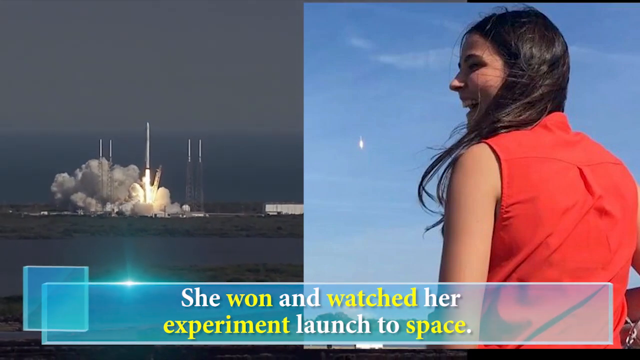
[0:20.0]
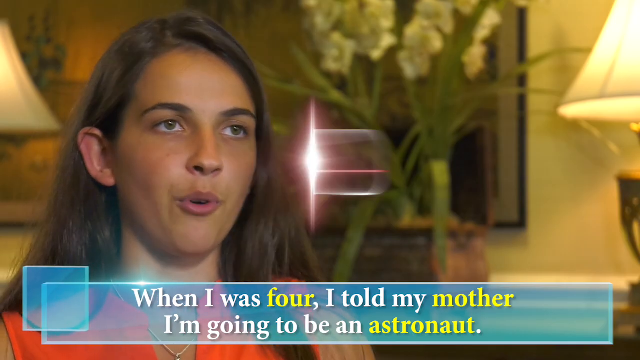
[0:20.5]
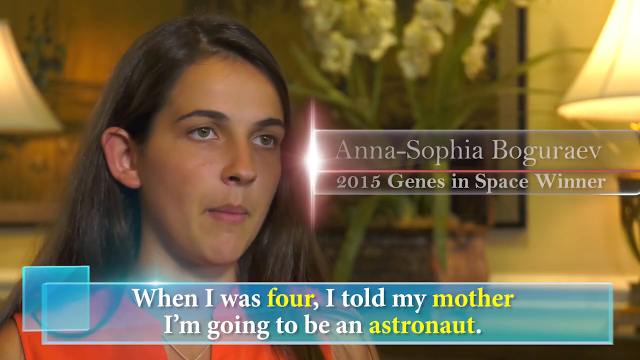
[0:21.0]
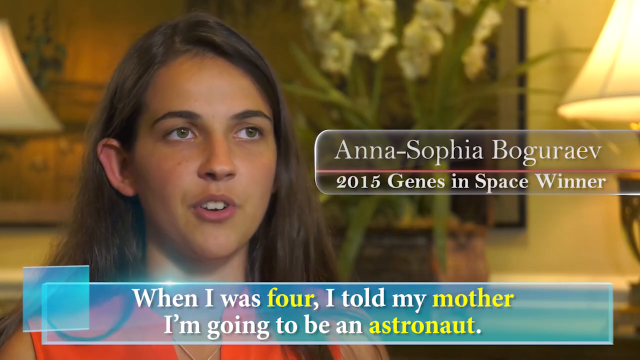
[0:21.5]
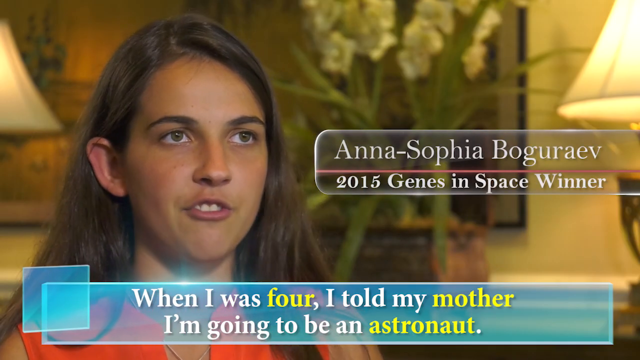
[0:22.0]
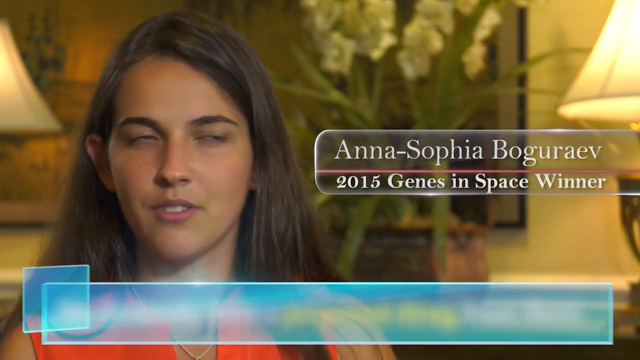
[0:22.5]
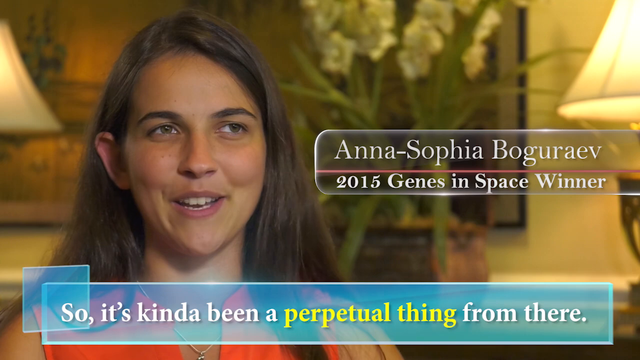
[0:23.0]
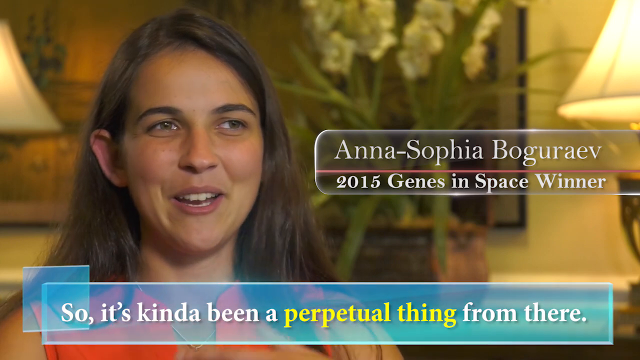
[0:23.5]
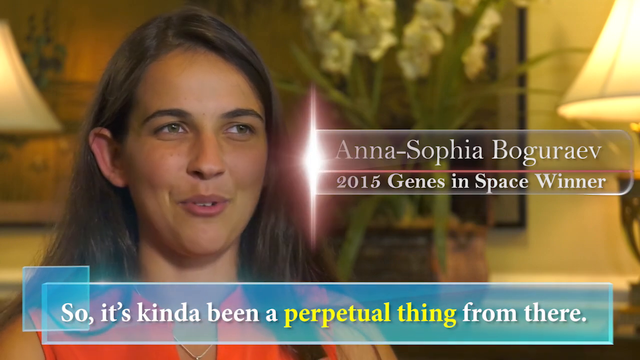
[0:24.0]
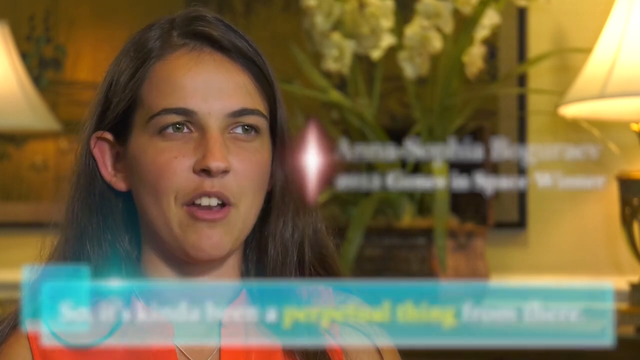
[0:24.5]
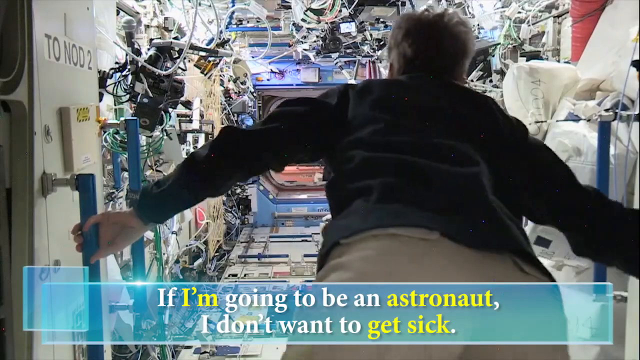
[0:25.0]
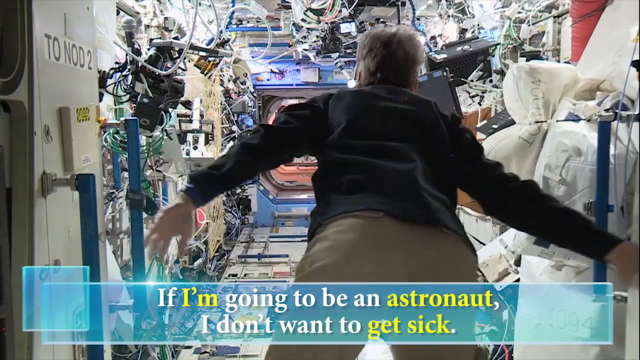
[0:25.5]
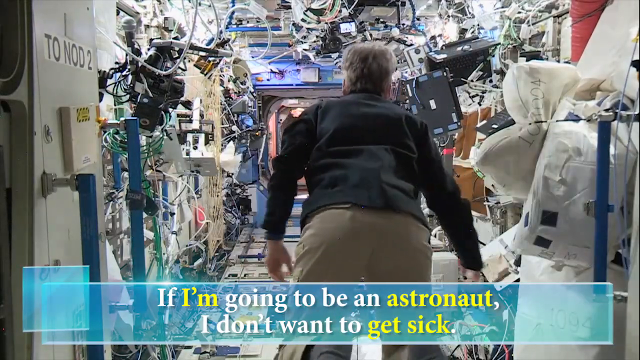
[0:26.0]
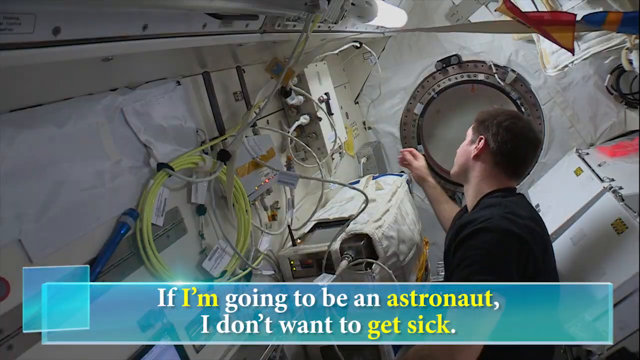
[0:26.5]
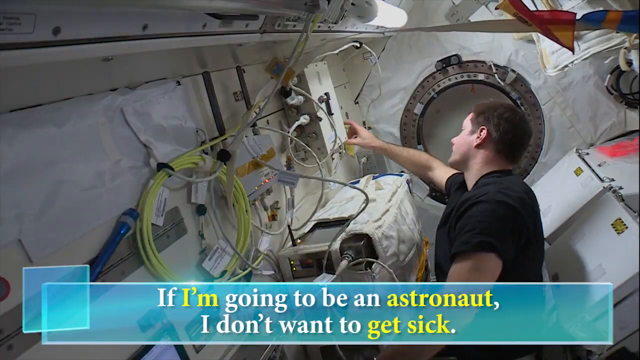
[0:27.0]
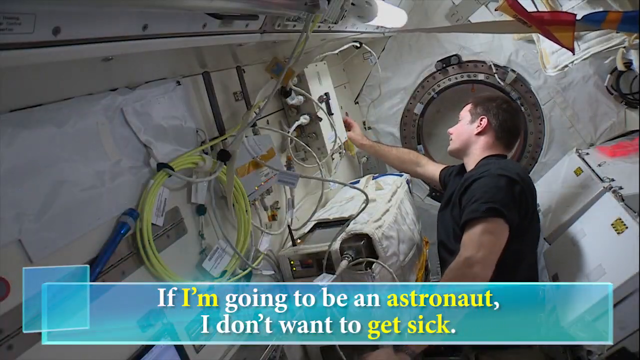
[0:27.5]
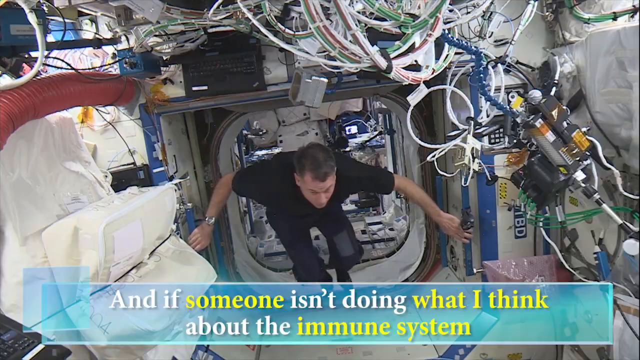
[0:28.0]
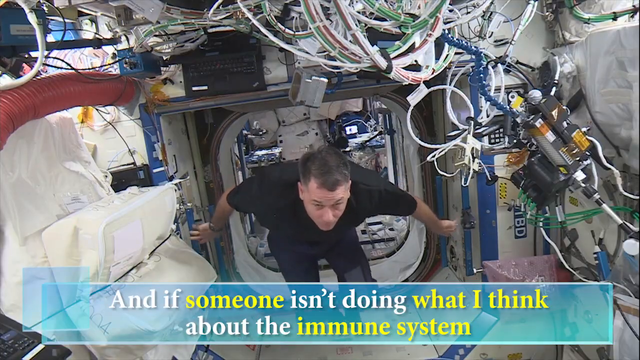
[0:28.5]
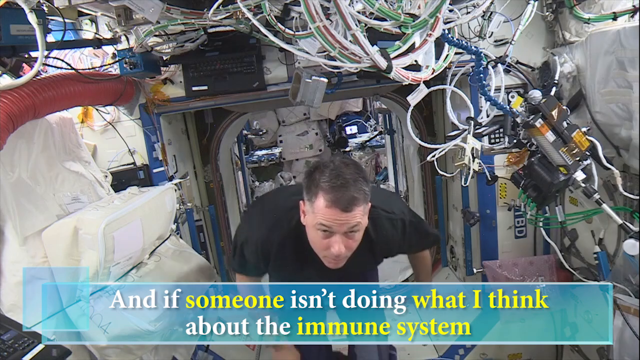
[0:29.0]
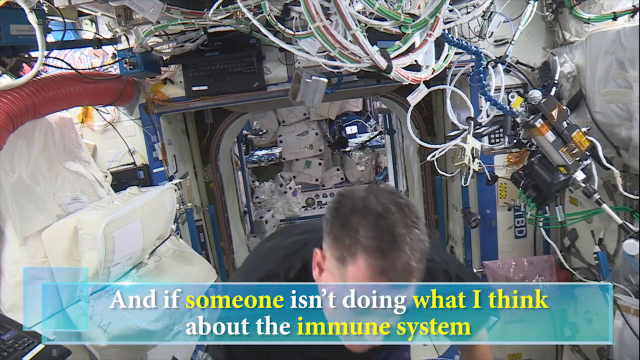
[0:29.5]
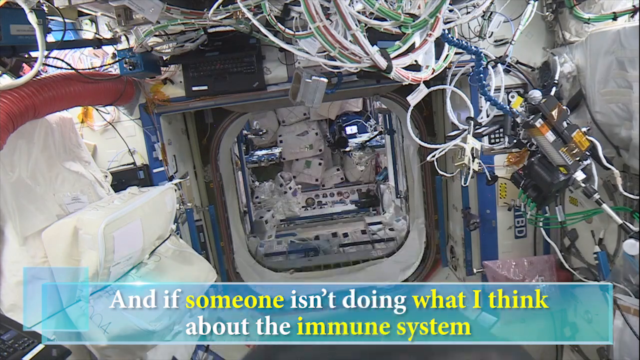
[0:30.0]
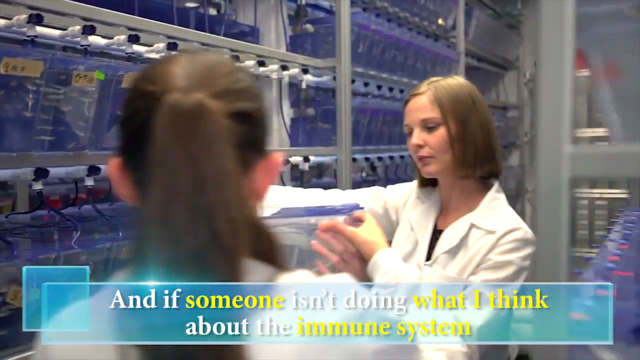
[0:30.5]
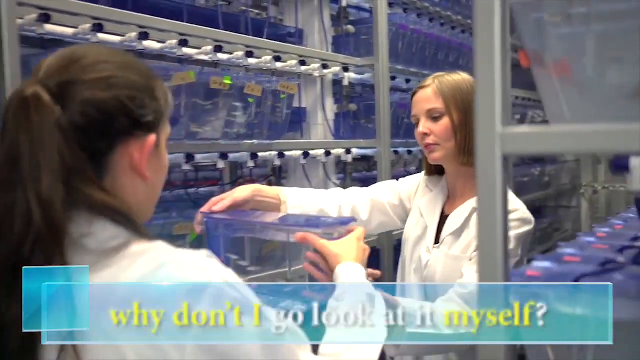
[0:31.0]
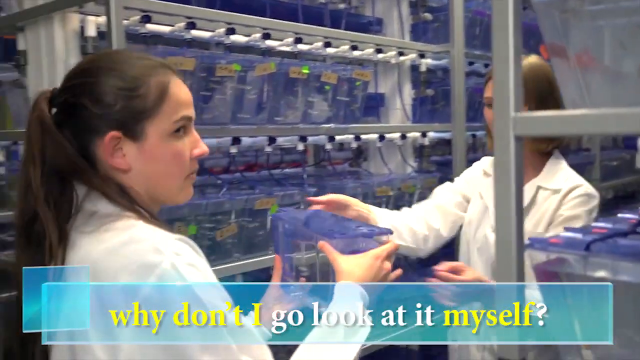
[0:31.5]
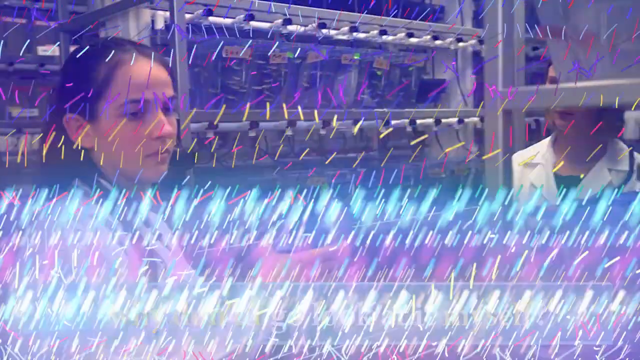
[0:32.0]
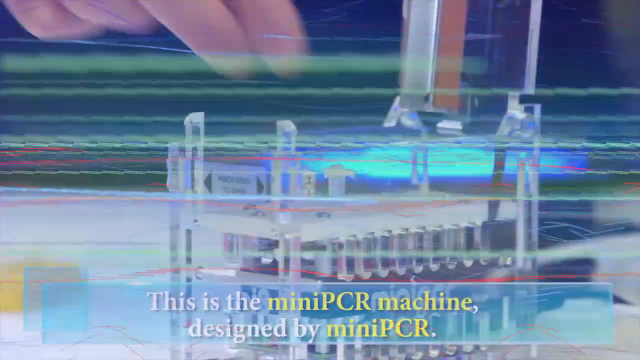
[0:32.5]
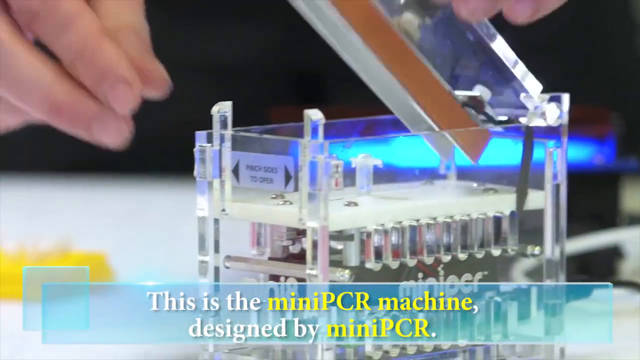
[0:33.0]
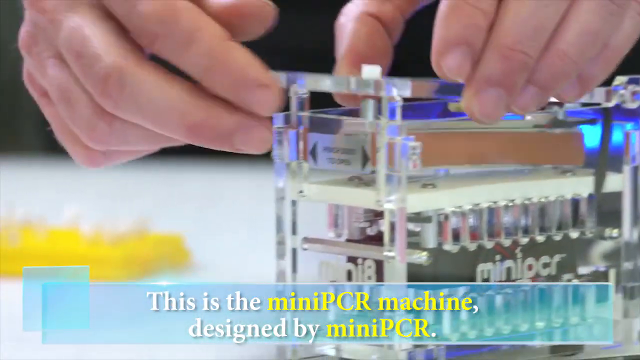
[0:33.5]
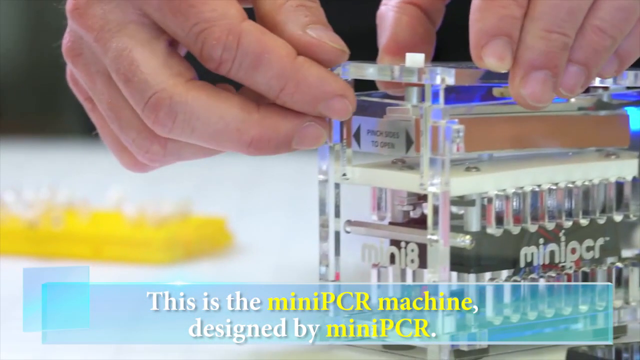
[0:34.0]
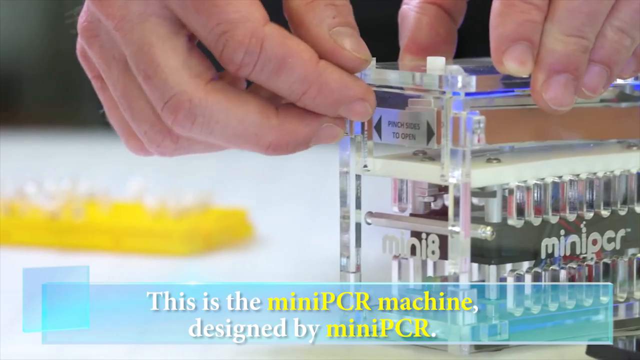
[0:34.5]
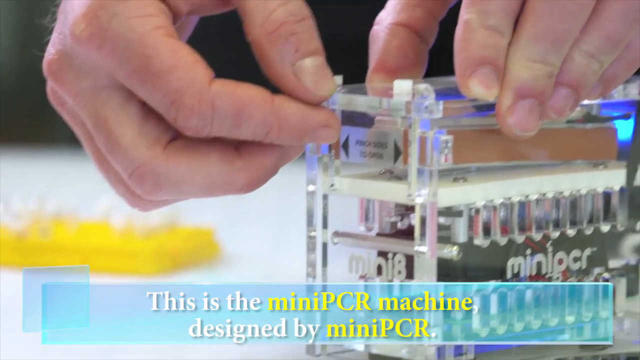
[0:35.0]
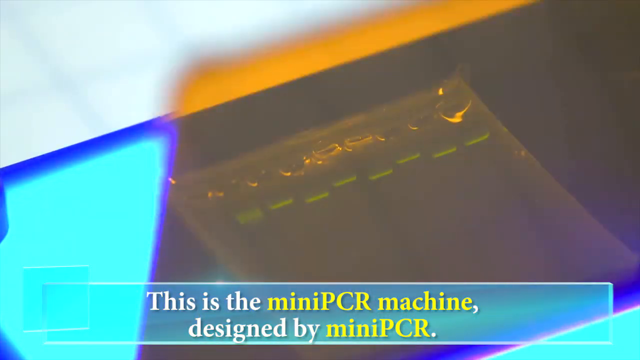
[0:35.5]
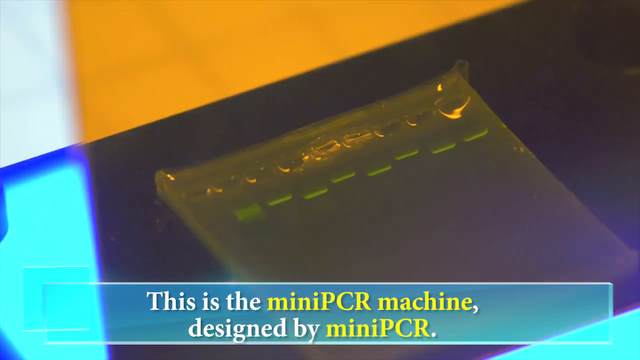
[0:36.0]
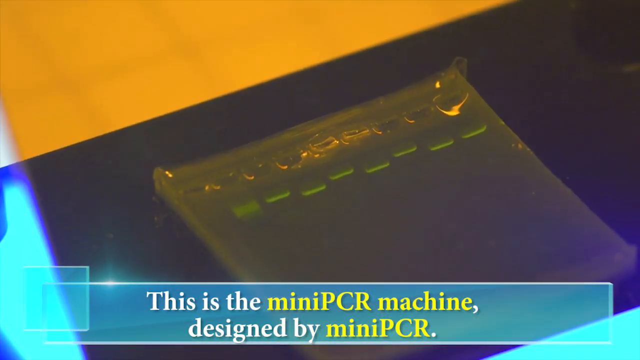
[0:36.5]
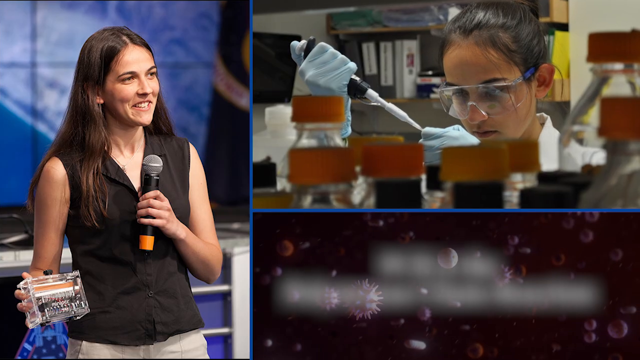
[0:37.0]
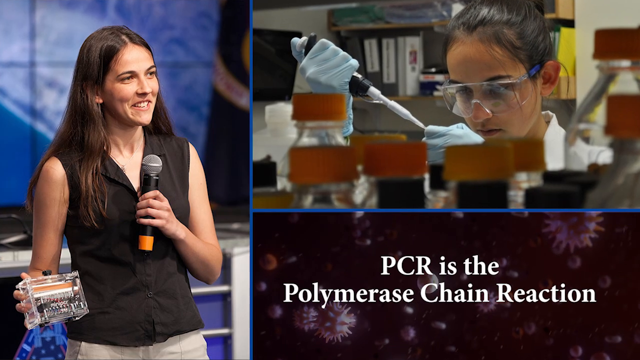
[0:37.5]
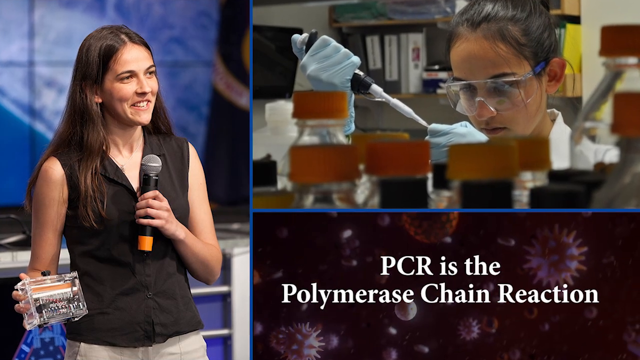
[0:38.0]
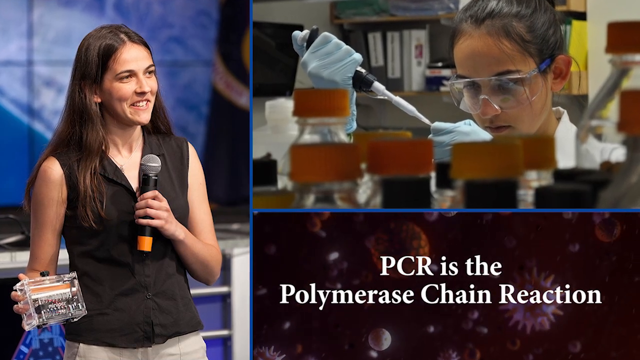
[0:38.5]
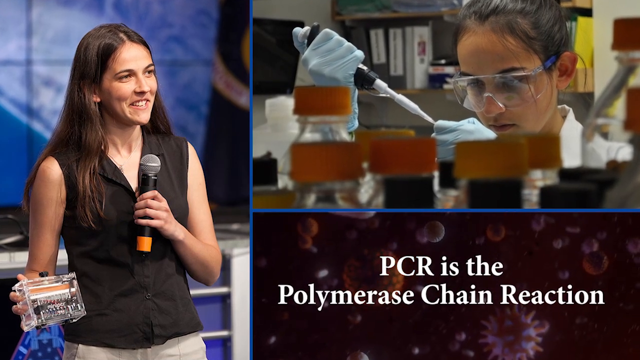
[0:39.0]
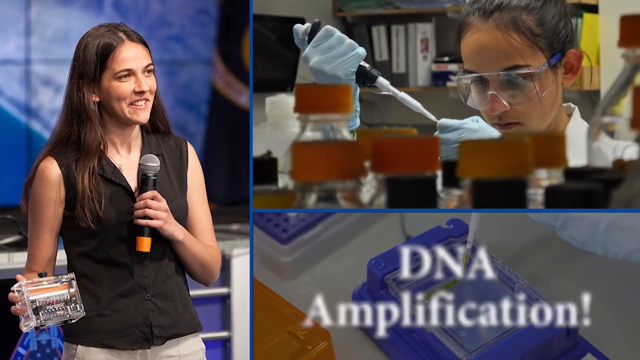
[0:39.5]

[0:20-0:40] A woman with long black hair in a red shirt smiles and laughs while her hair kind of blows in the wind against a blue sky. On the left is a launch with smoke and fire, and a blue banner at the bottom carries white and yellow text reading "she won and watched her experiment launch to space." Text reads "When I was four I told my mother I'm going to be an astronaut" as a woman talks to the camera, with her information on the right in a kind of transparent banner reading "Anna Sophia Bugharev 2015 Genes in Space winner." She talks and smiles, and another blue banner at the bottom with white and yellow text reads "so. It's kind of been a perpetual thing from there. If I'm going to be an astronaut I don't want to get sick." Someone comes in through a door with NASA equipment kind of surrounding them, floating. Then a man with a bunch of cables around him grabs something kind of off the wall, and he is then seen kind of floating in another room. The text at the bottom changes to "and if someone isn't doing what I think about the immune system why don't I go back to look at it myself," and a woman grabs something from another woman. A bunch of little multicolored lights pop up on the screen, then the video transitions to a PCR machine with white and yellow text reading "this is the mini PCR machine designed by mini PCR." A person closes the lid on it. A picture shows a woman with long brown hair speaking into a microphone and holding the mini PCR machine. What looks to be the same woman is possibly doing work in a lab, with white text beneath reading "PCR is the polymerase chain reaction. DNA amplification."